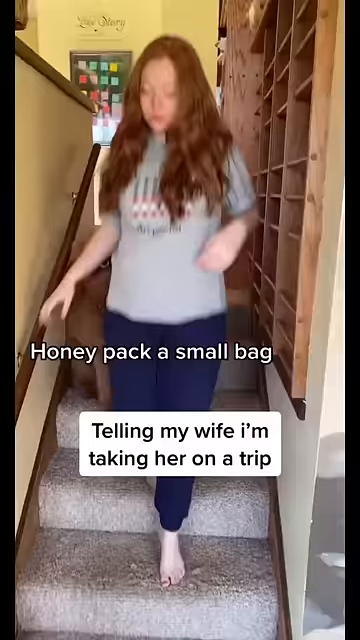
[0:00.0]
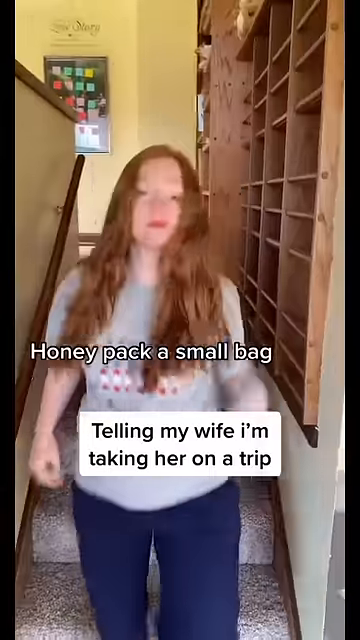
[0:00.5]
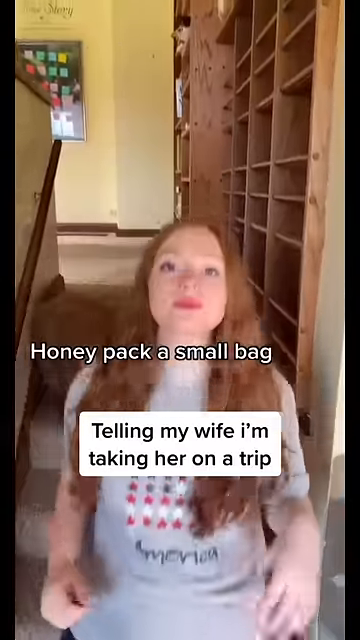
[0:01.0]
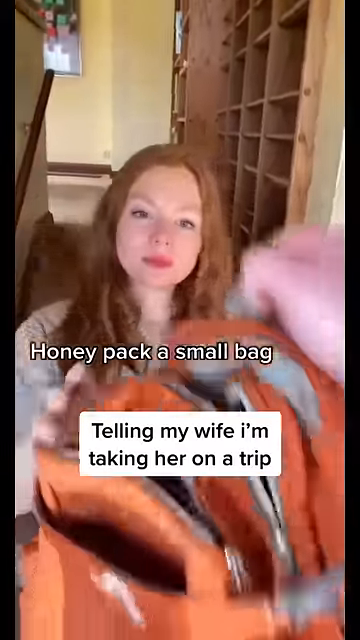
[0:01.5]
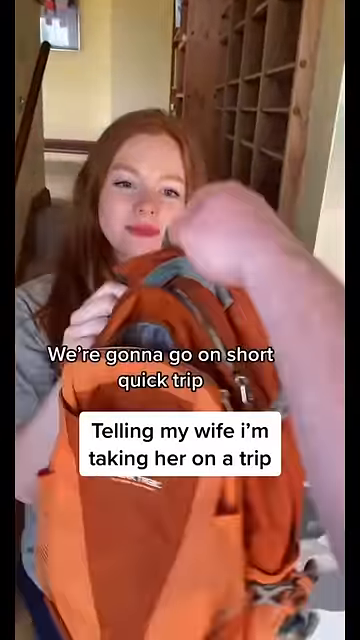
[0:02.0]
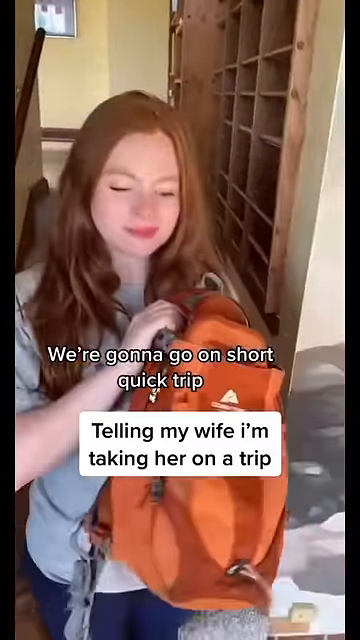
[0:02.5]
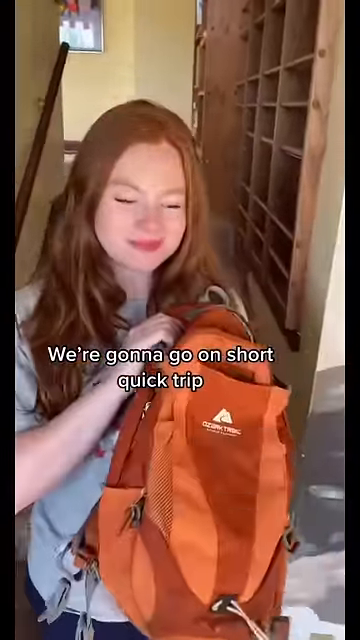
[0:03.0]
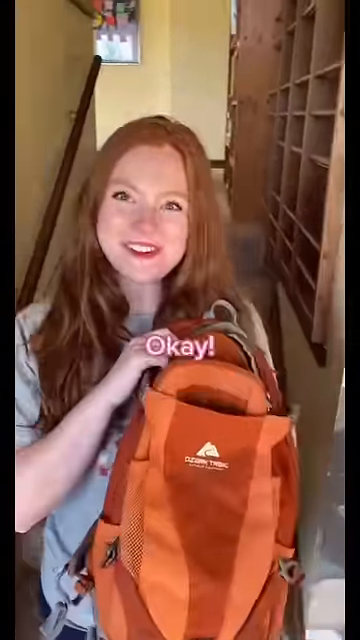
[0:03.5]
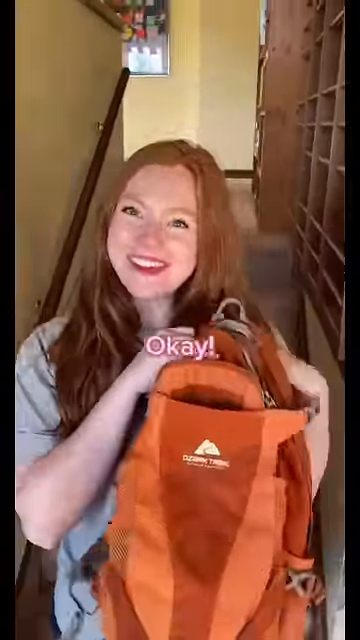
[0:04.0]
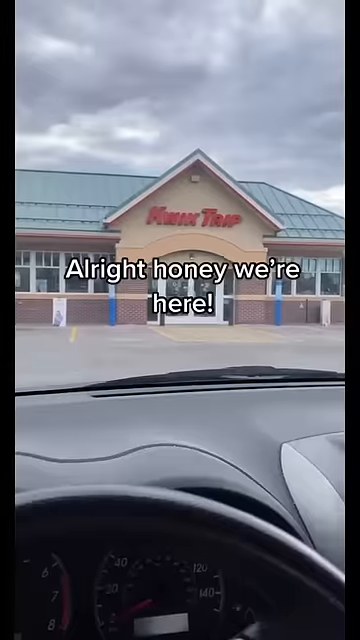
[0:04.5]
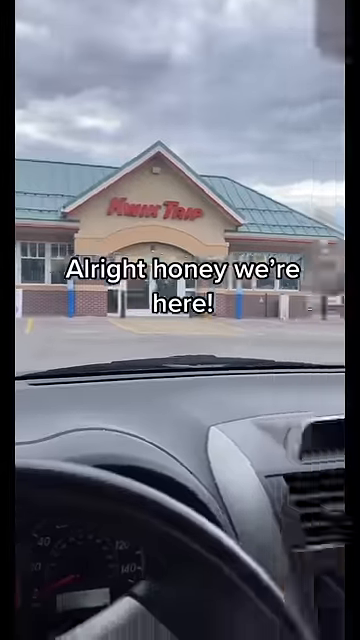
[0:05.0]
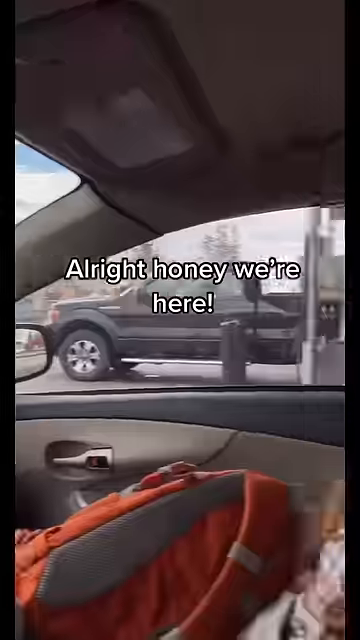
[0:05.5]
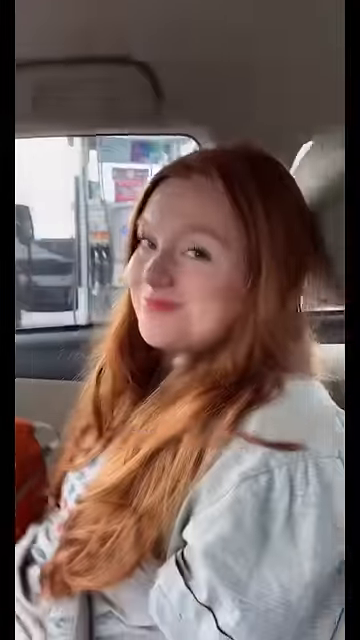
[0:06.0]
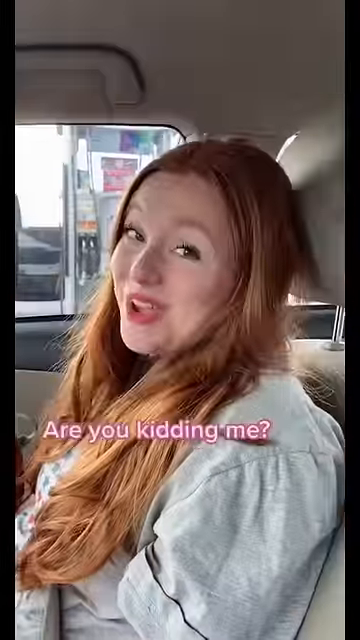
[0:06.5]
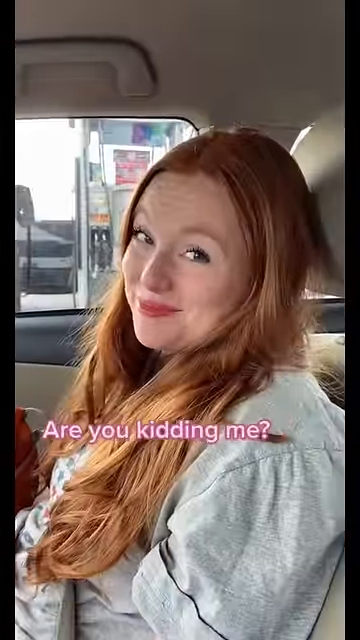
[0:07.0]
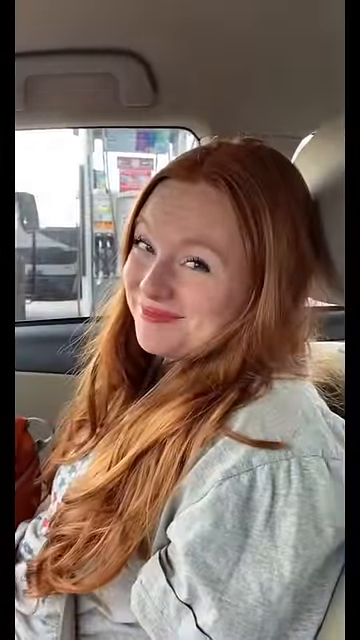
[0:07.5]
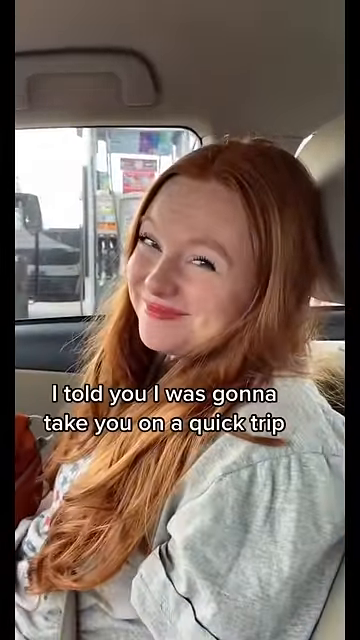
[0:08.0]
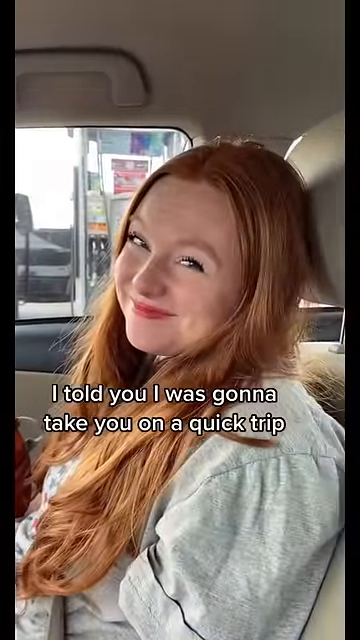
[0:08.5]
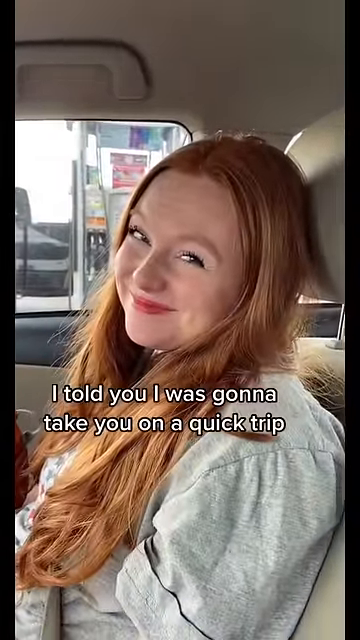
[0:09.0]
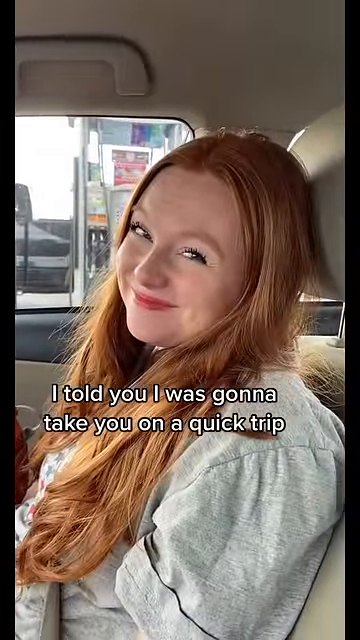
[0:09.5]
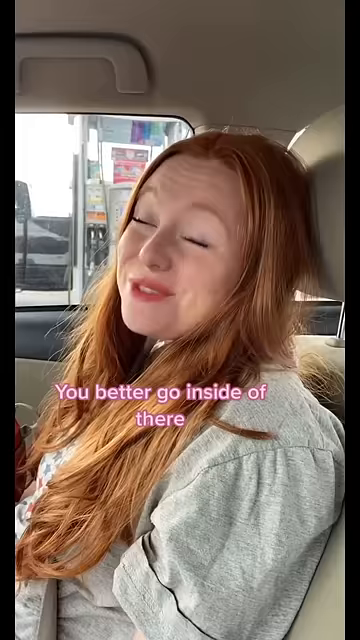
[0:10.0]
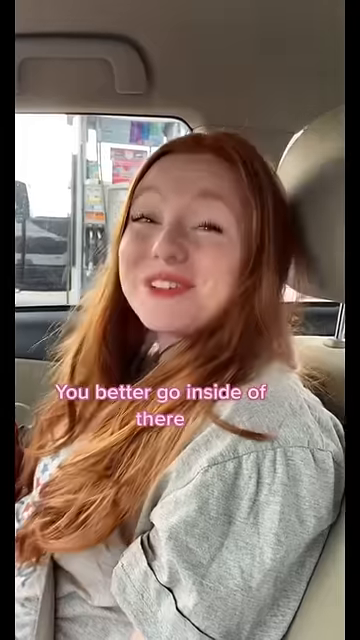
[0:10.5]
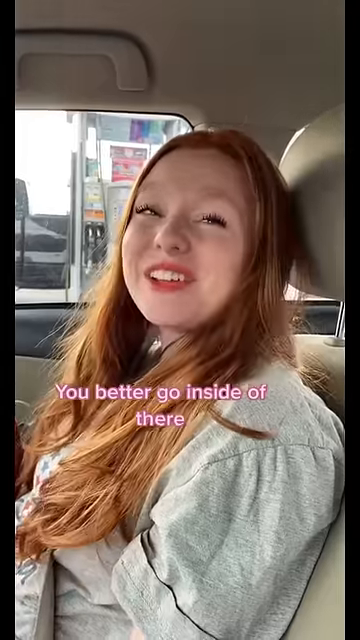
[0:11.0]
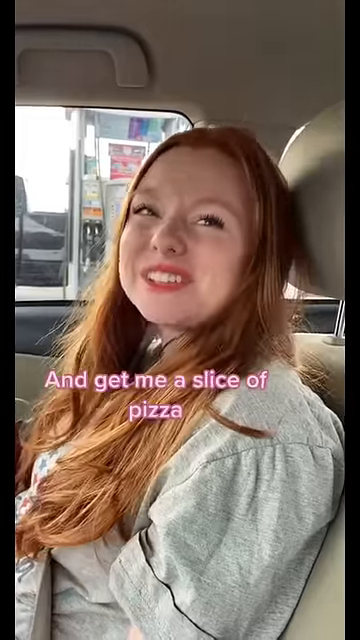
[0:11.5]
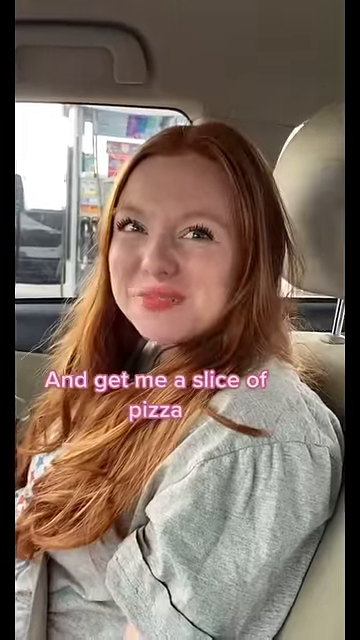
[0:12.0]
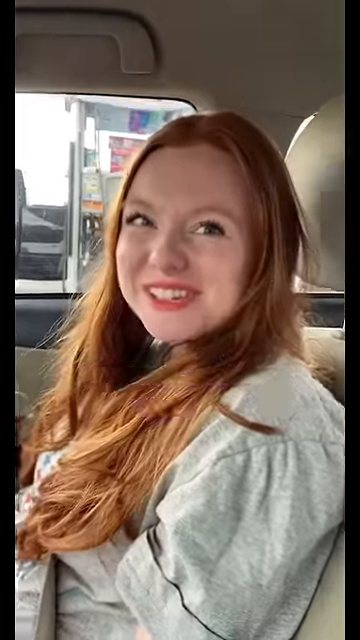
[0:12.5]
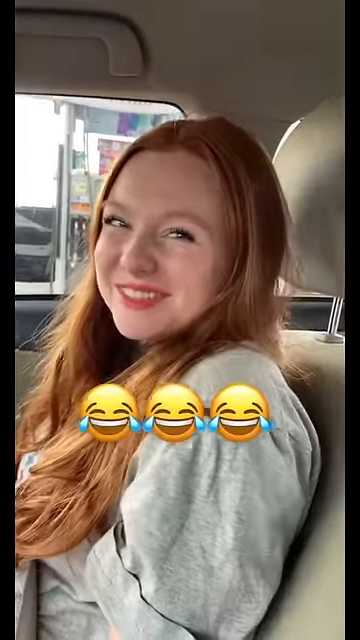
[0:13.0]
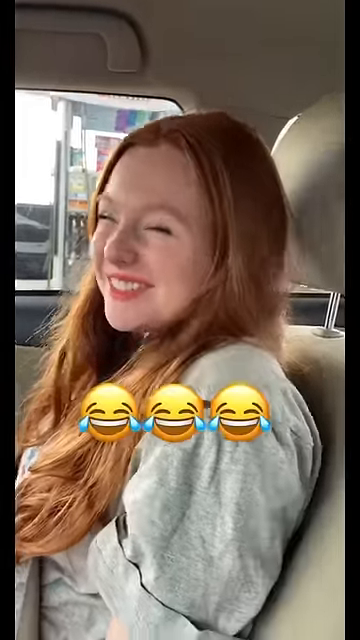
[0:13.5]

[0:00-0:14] A woman with long brown hair, wearing a tee shirt and jeans, walks down a pair of steps, with a shelving unit on one side of the steps and a wall on the other. Her husband hands her her purse and tells her he is taking her on a little trip. The bag is orange and has pockets. Next she is in the car, and they stop in front of a business; what appear to be gas pumps are outside the car, which is next to the business. She looks at her husband and smiles. She says, "You're kidding me, you need to go in there and get me a slice of pizza," and he says, "I told you I was taking you on a little trip." She laughs.